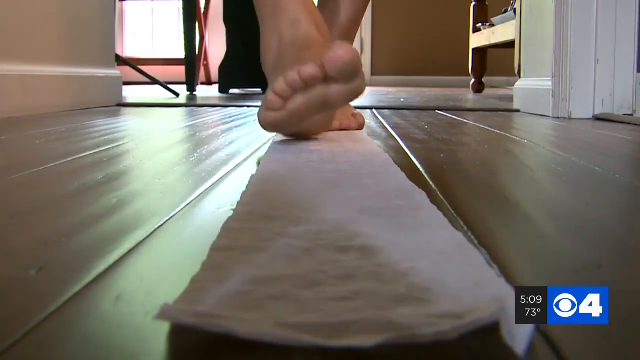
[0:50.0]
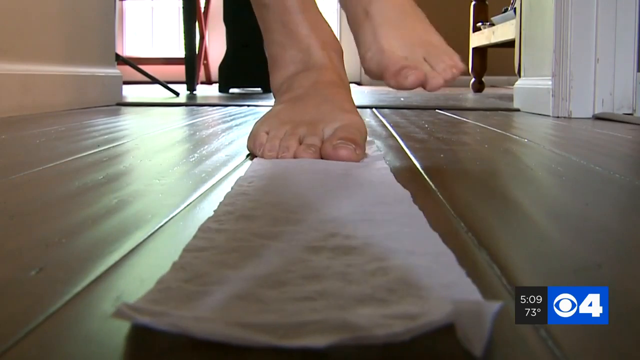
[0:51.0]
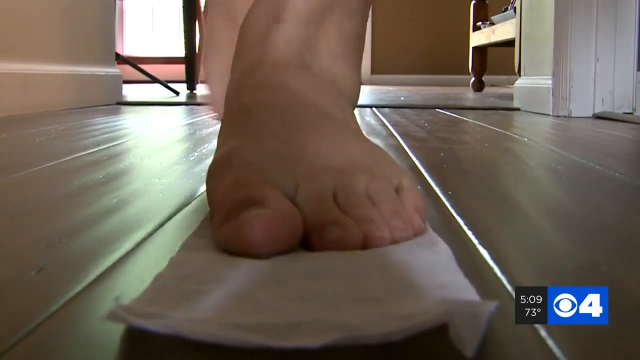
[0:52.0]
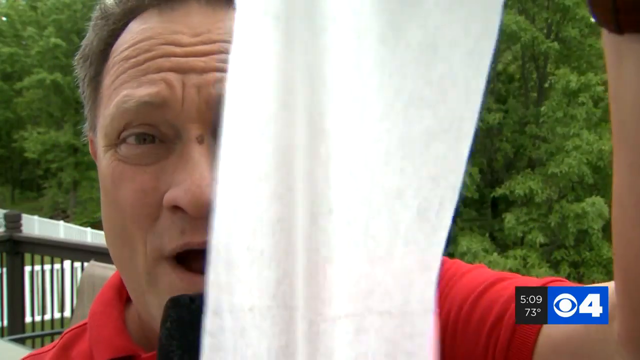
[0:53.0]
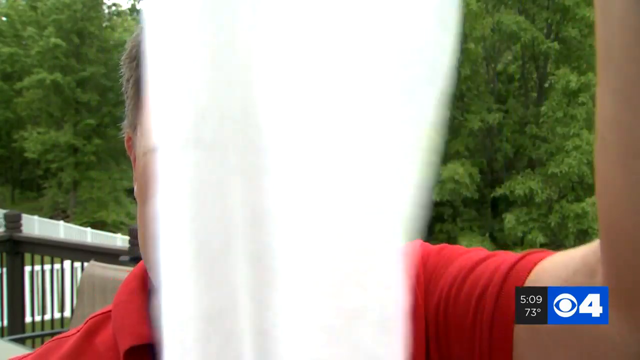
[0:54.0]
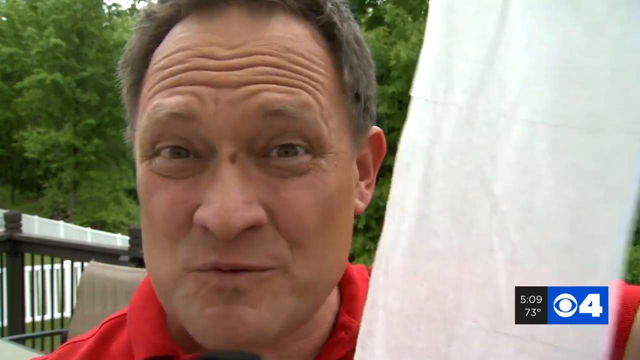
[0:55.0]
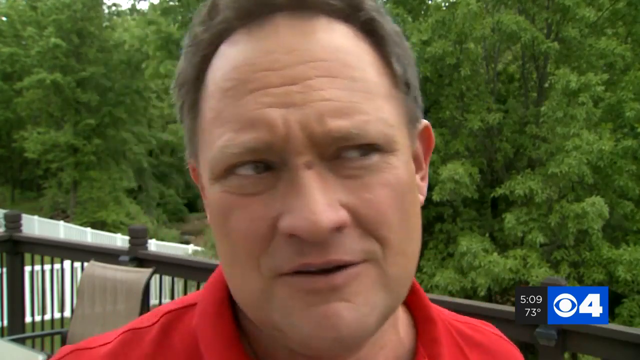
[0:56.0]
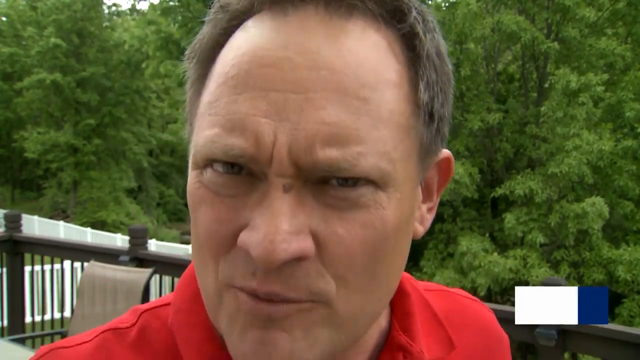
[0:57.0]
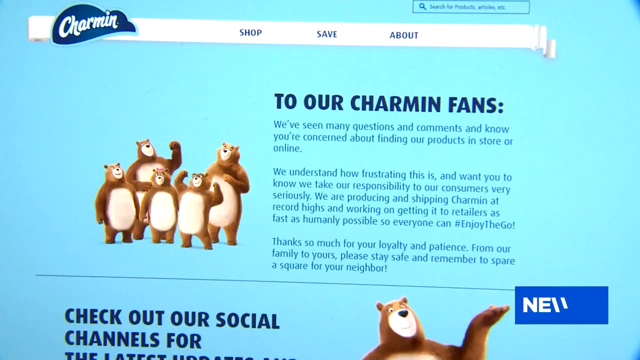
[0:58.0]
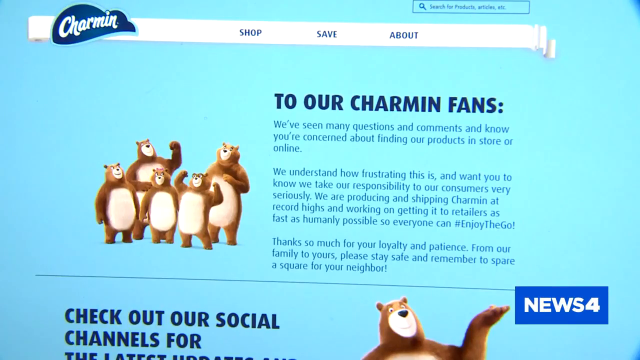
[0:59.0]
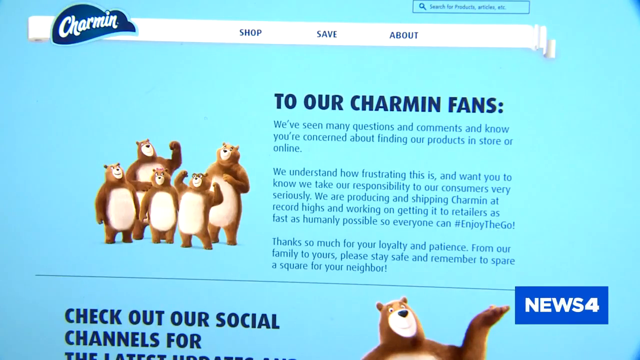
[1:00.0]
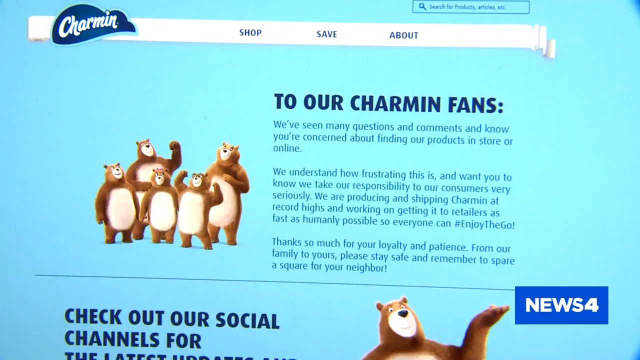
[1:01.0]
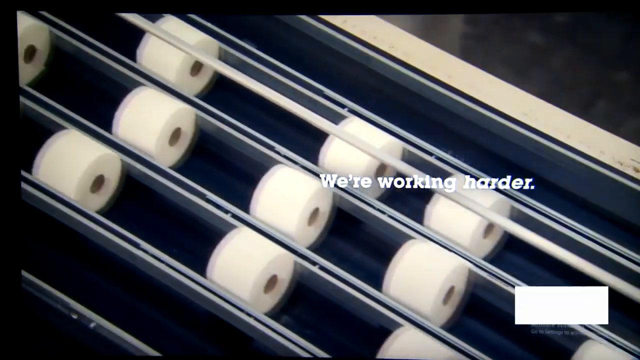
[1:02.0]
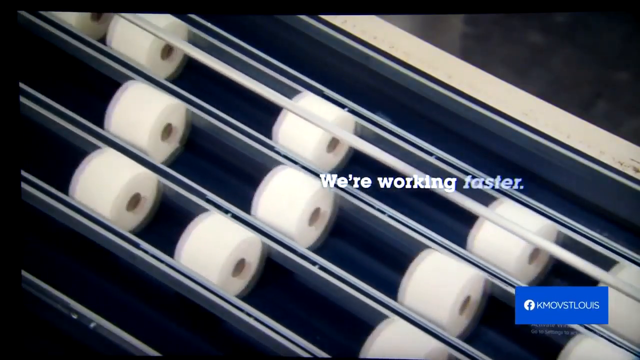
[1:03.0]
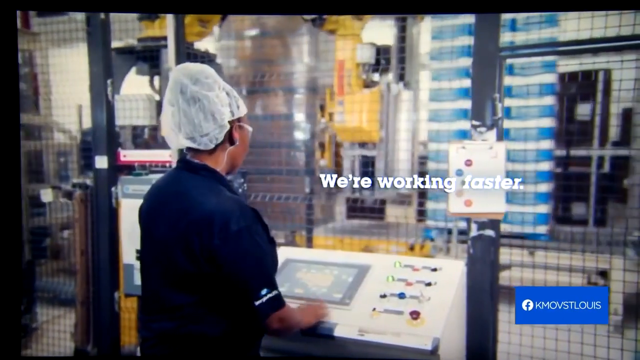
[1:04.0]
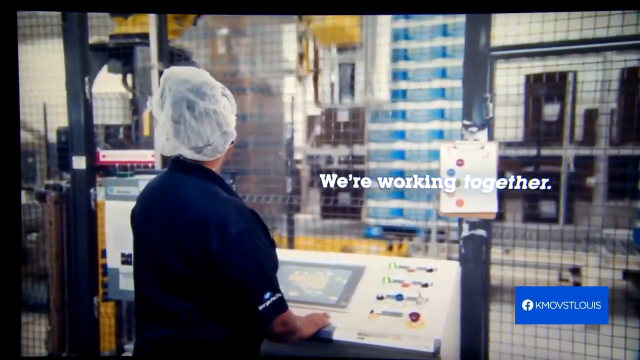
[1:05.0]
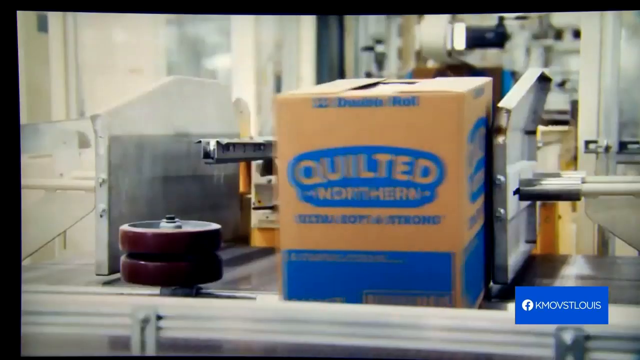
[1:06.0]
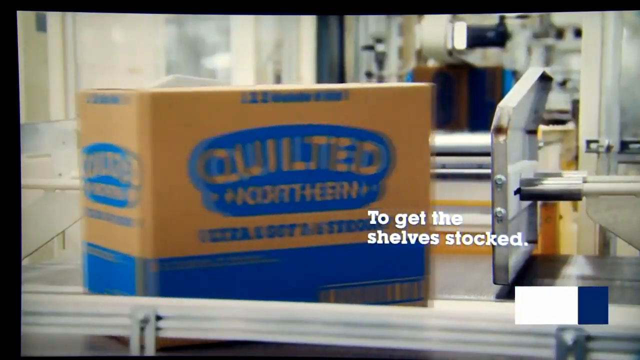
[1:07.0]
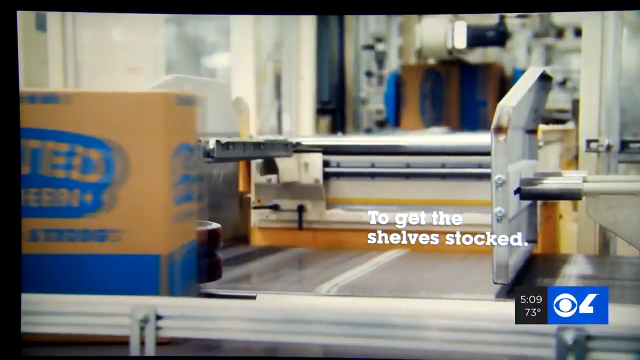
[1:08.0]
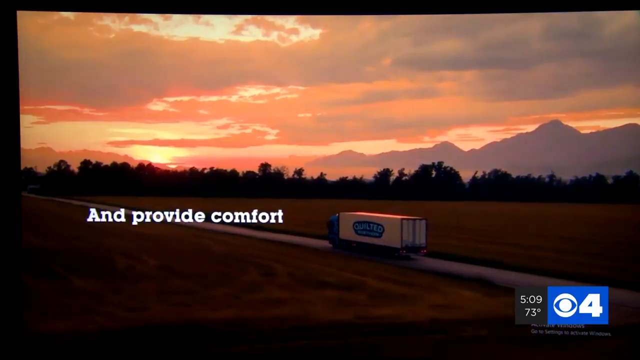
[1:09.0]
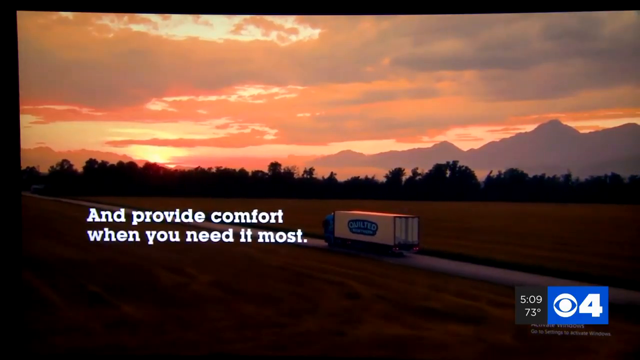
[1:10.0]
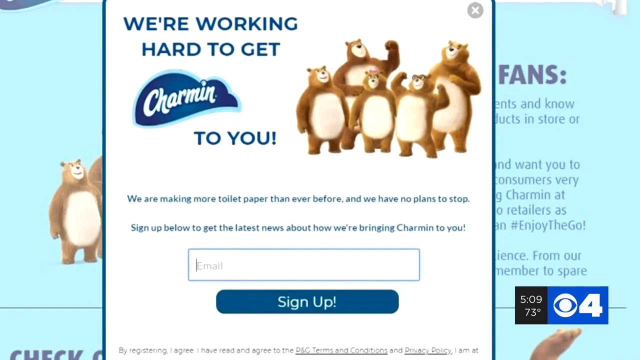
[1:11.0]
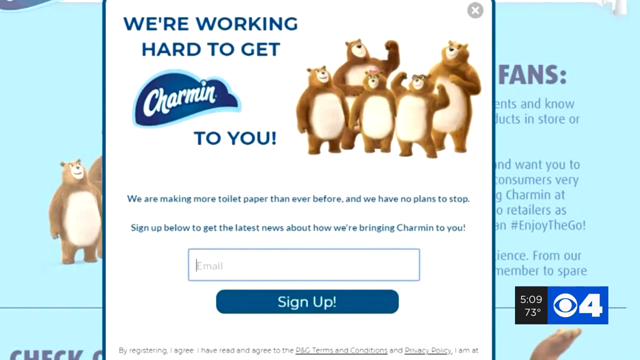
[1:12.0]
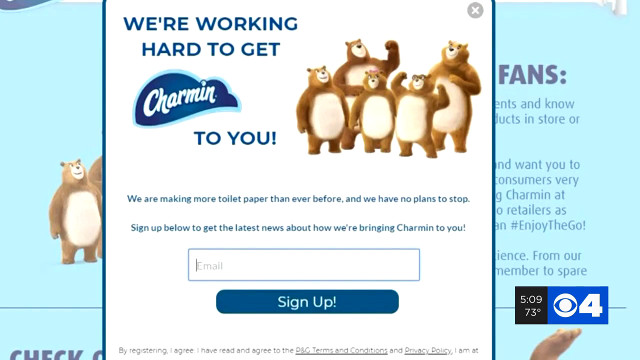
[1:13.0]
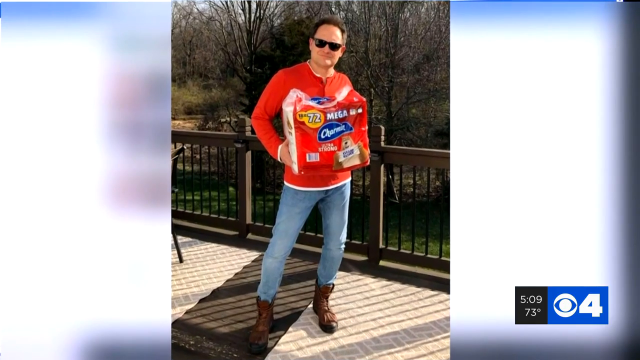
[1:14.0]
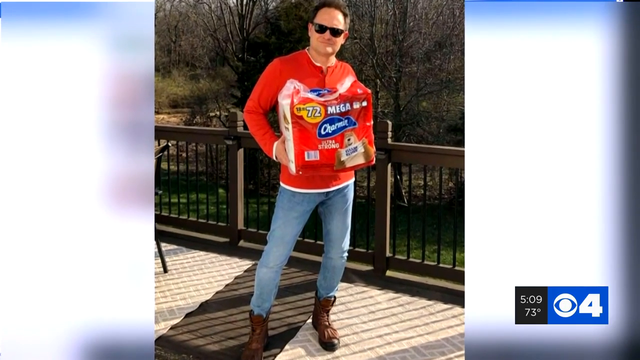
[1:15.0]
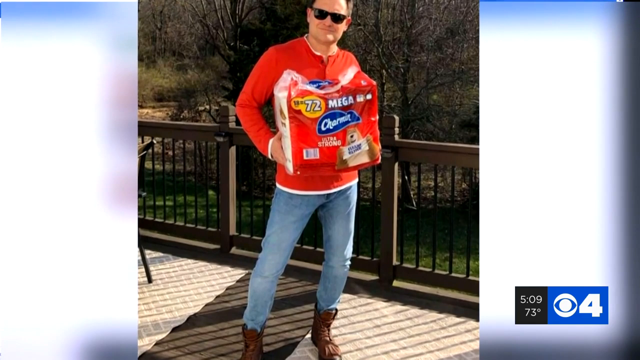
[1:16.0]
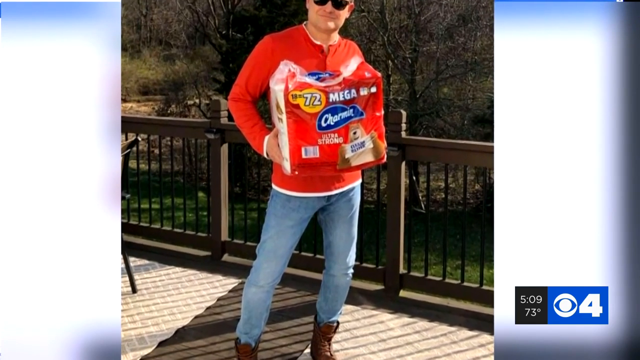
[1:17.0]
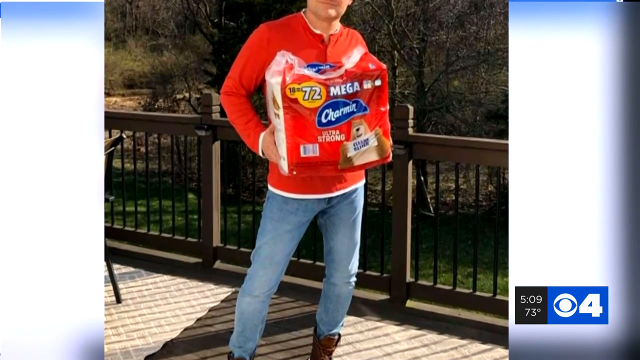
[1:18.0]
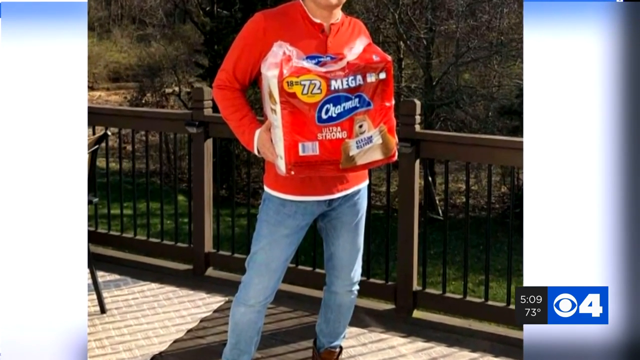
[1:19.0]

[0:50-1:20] A man rolls a roll of toilet paper out on the floor and walks on it in his bare feet. A Caucasian man in a red short-sleeved shirt holds up Charmin as it is rolled out. The video goes to the Charmin website, then shows toilet paper moving down a conveyor belt. An African-American woman, probably in a manufacturing location, works a machine; she wears a hair net, safety glasses and a short-sleeved blue shirt. Quilted Northern and a box come down a conveyor belt, and a Quilted Northern truck drives down the street, possibly carrying many supplies of Quilted Northern. The video returns to the Charmin website, where there is a sign-up to possibly get Charmin shipped home. Then a Caucasian man in sunglasses, a red long-sleeved shirt, blue jeans and blue boots stands outside on his deck with a Mega Pack of Charmin of 72 rolls.